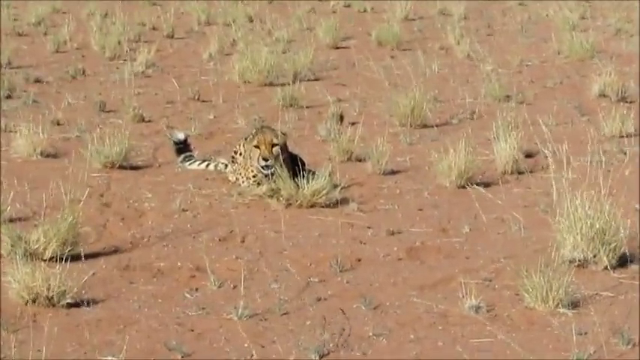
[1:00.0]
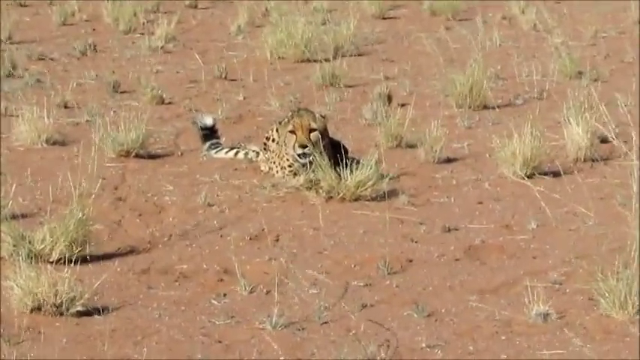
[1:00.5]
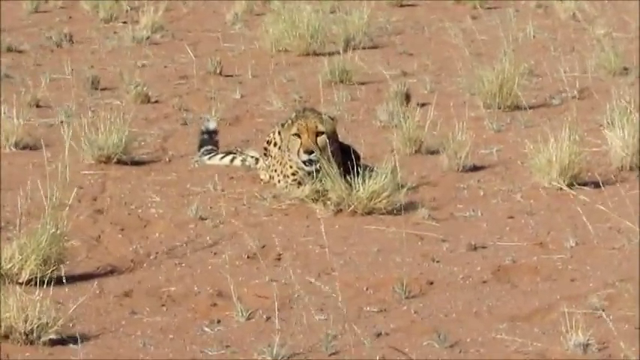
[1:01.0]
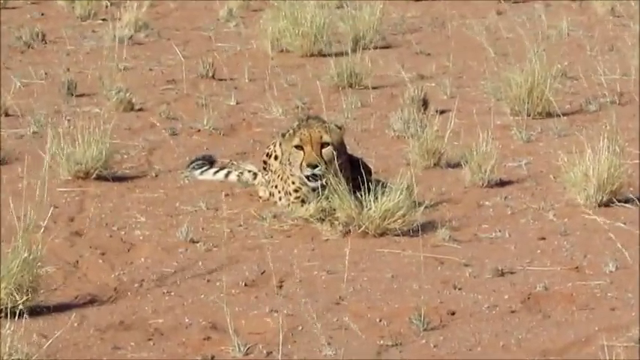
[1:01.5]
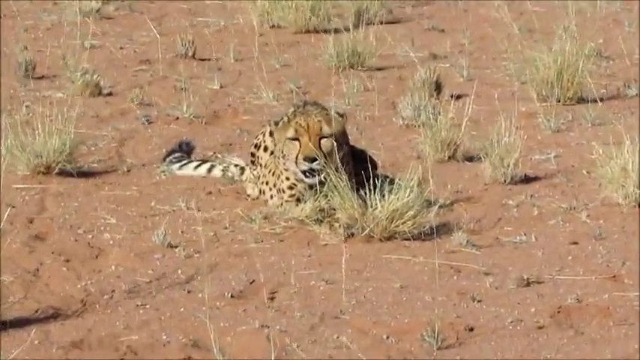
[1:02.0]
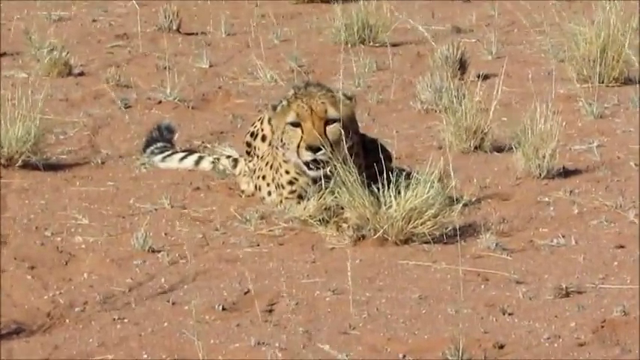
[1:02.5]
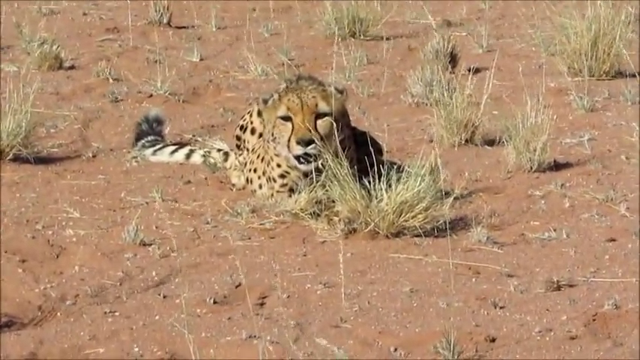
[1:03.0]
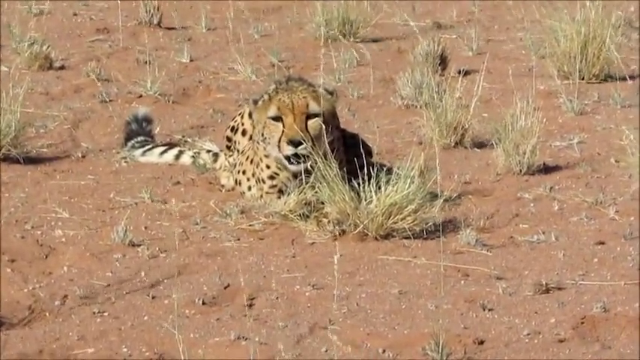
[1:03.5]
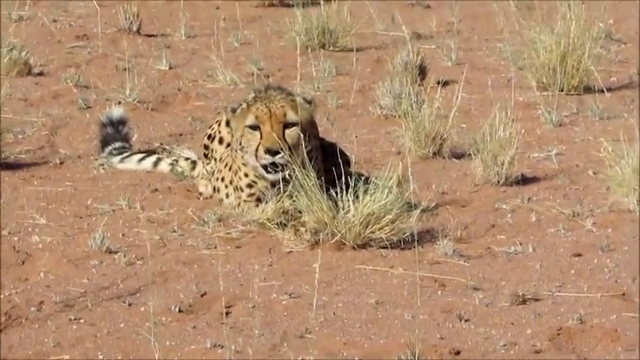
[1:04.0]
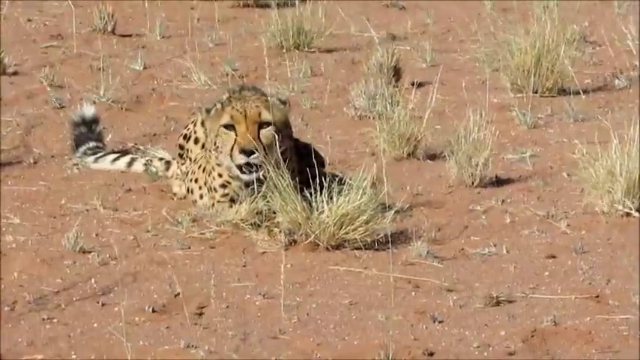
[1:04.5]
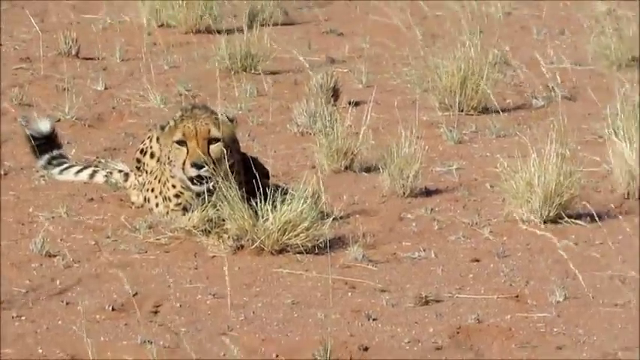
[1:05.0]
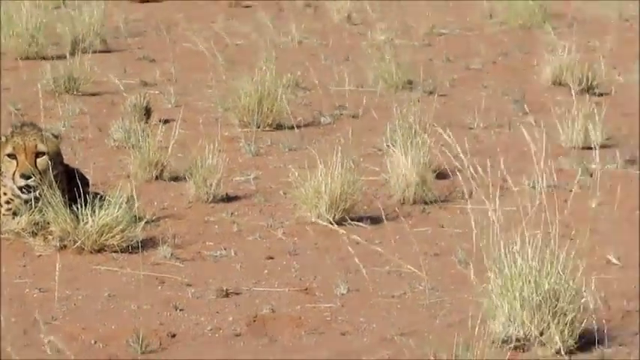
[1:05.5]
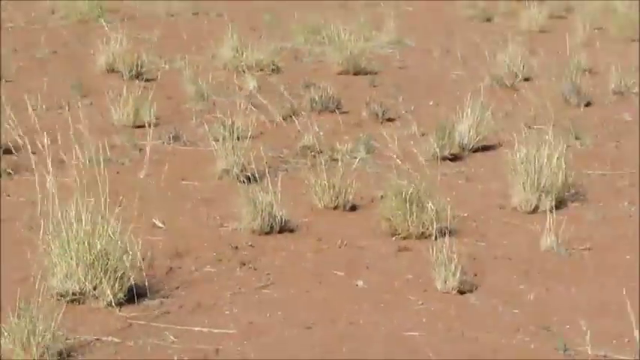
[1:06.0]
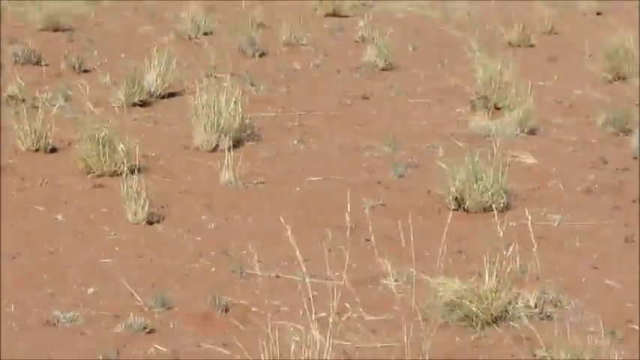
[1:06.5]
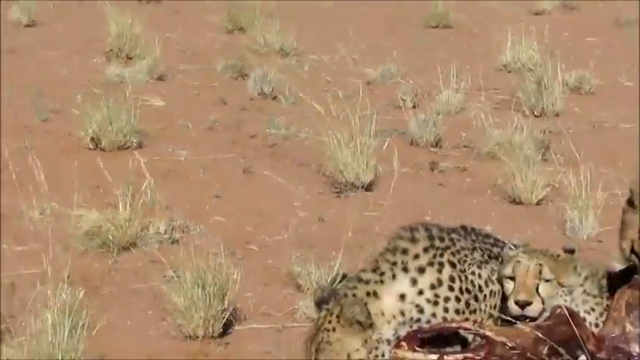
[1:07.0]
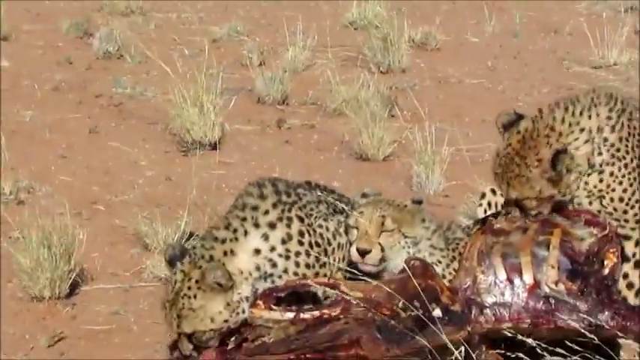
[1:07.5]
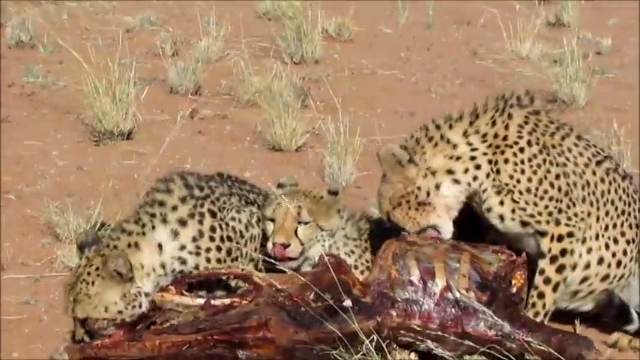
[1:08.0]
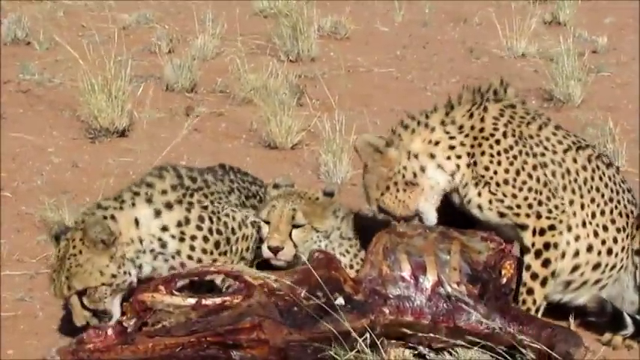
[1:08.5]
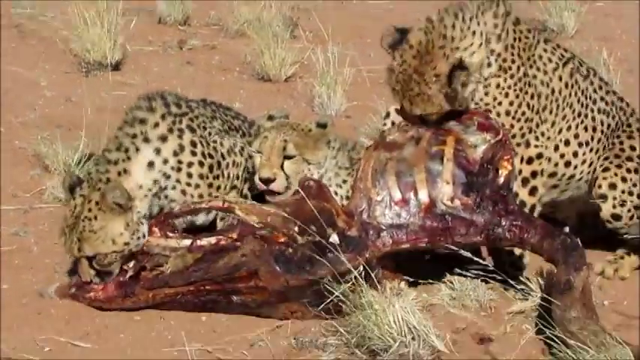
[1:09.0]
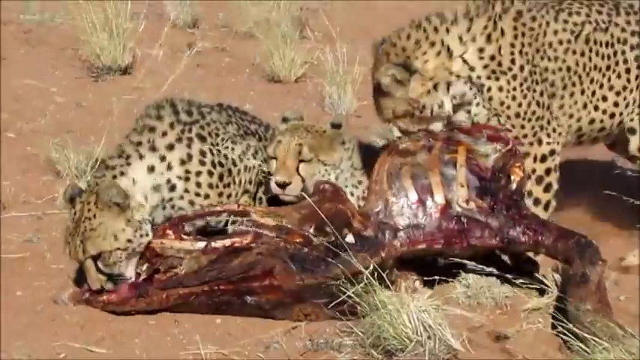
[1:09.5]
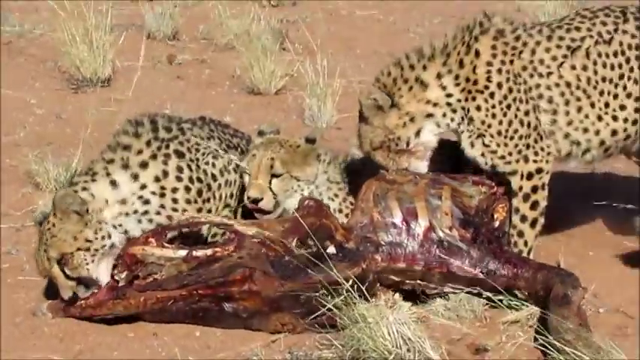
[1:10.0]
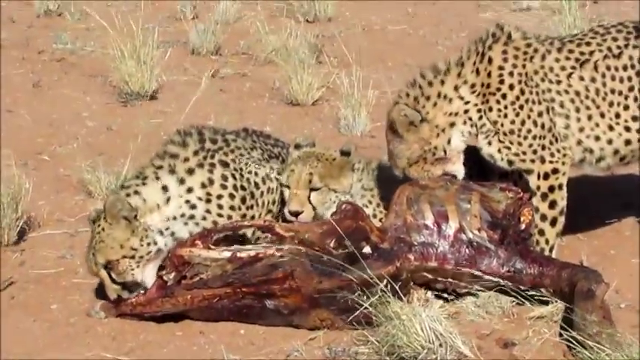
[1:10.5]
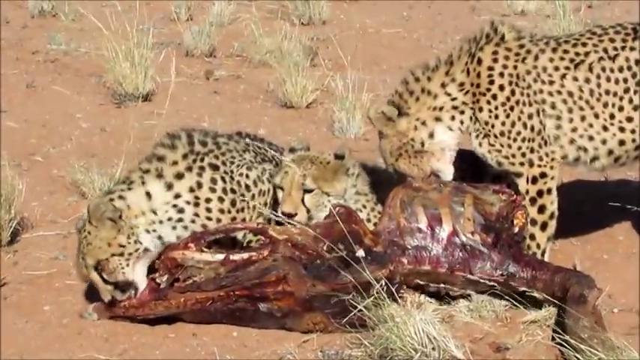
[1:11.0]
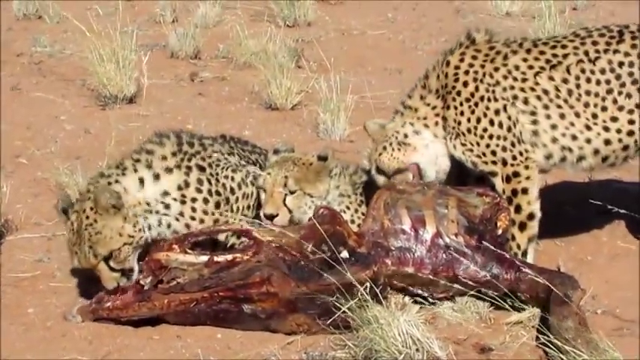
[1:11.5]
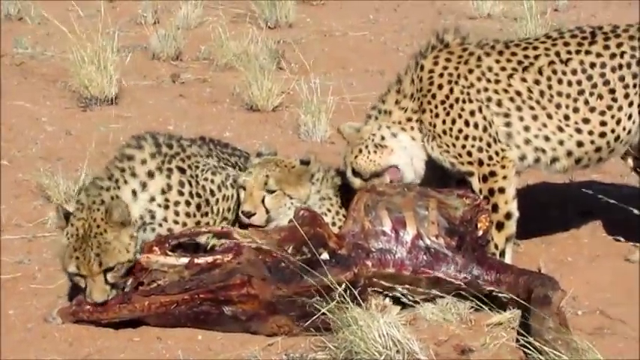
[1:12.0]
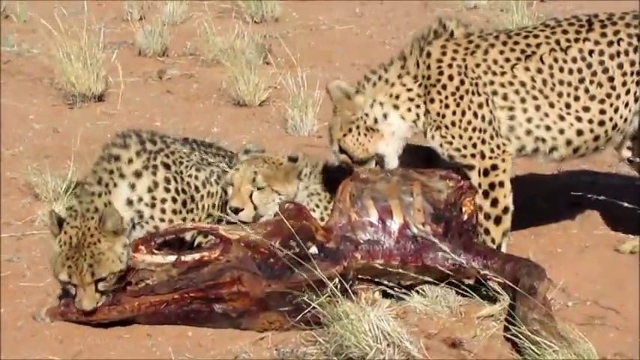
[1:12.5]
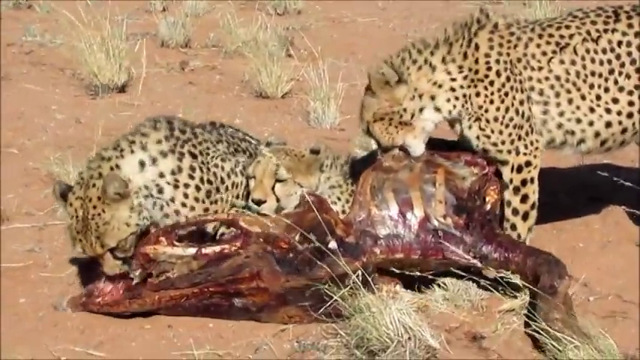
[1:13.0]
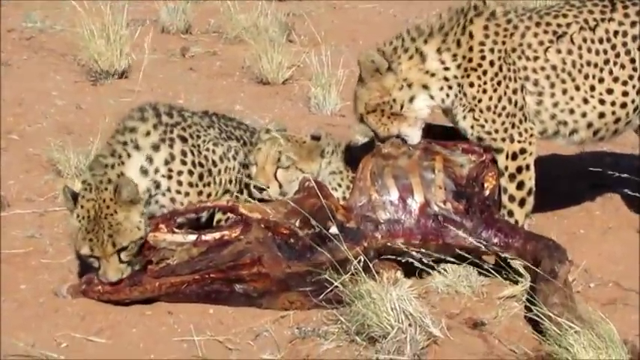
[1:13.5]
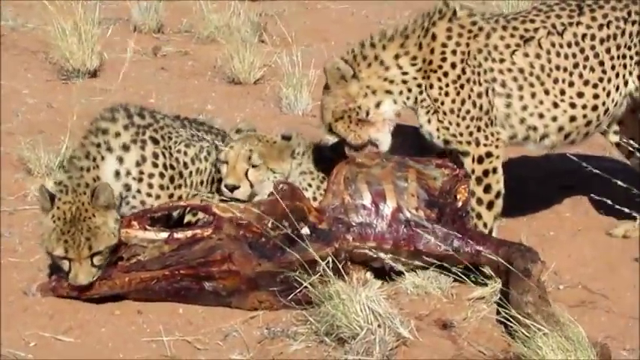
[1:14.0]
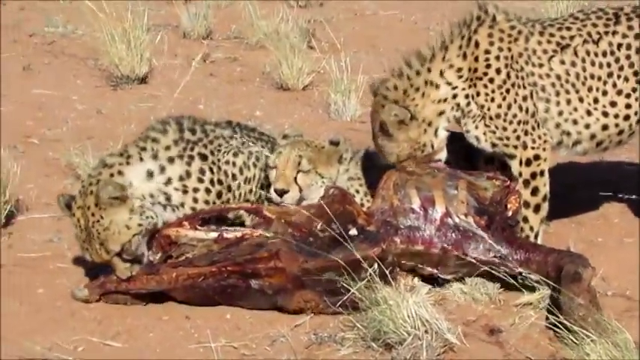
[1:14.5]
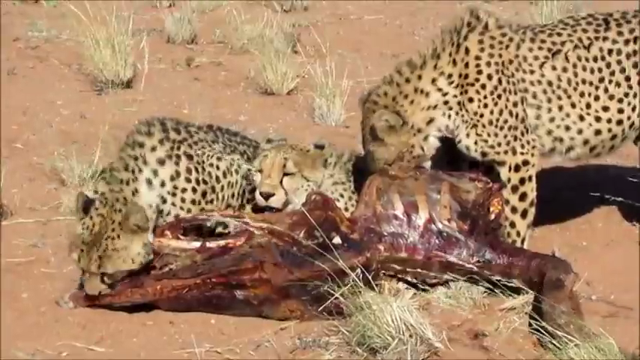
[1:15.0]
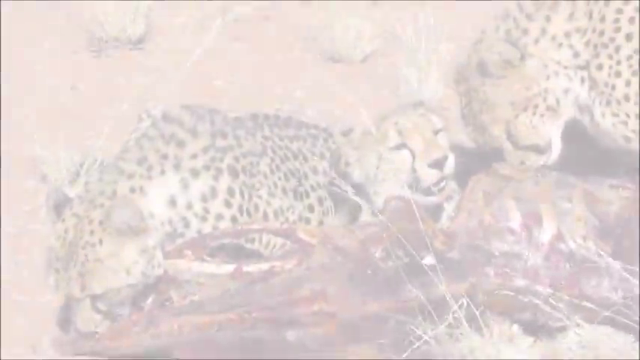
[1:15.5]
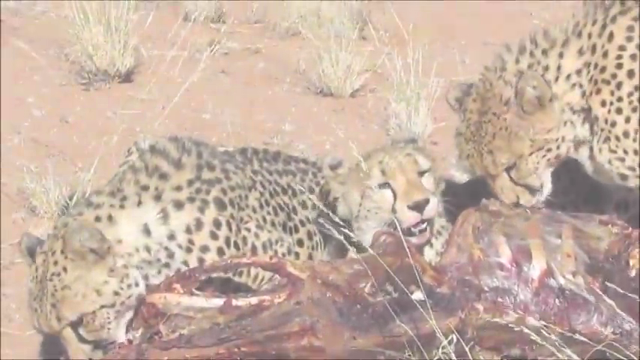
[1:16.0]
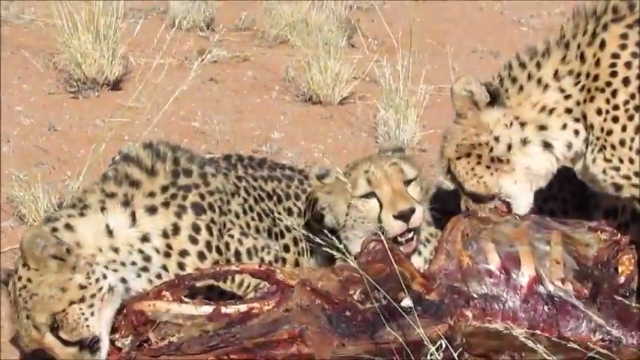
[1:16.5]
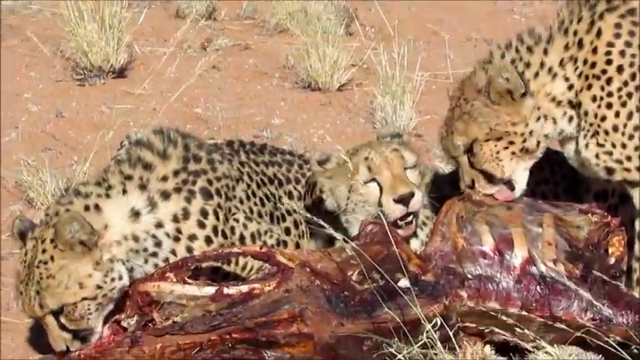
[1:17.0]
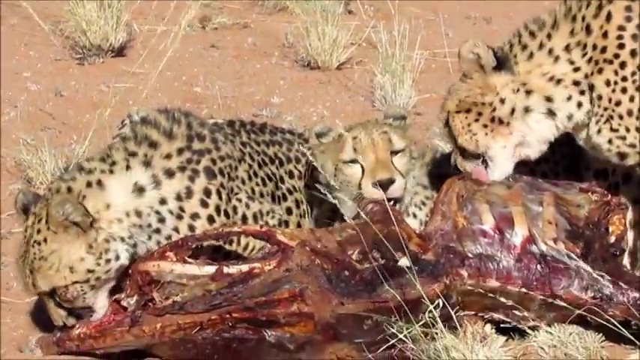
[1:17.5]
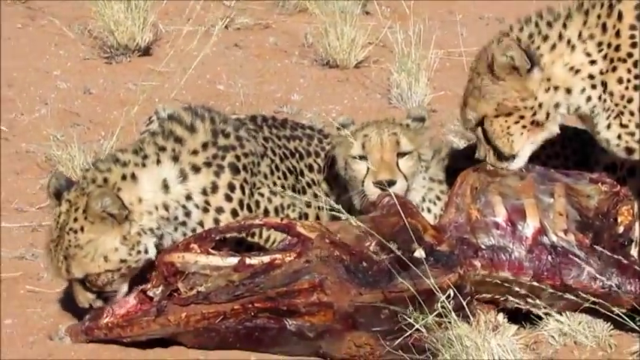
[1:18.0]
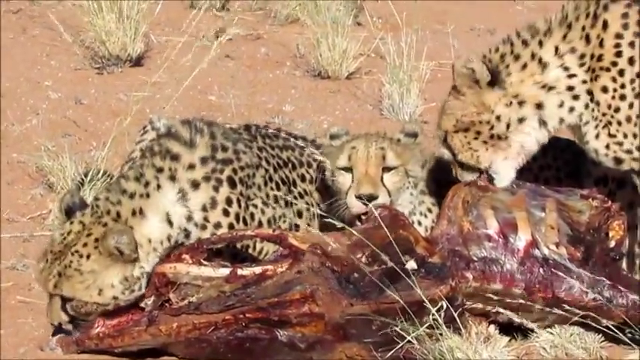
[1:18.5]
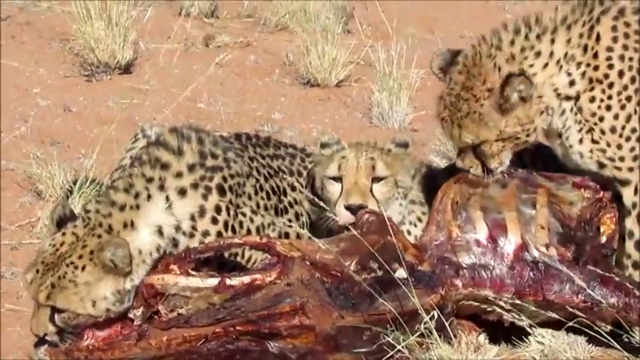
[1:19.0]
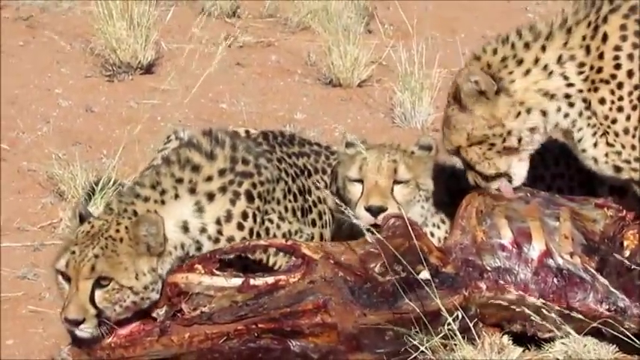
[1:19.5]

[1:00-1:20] A cheetah sits on its own in the middle of the frame in the arid shrubland, looking directly at the camera. The camera focuses and zooms in on the cheetah, which does not seem aggressive but appears to be carefully acknowledging the cameraman. The cheetah waves its tail once or twice before the camera pans back to the right, where the three cheetahs are still eating the carcass. The cheetahs on the left and right eat quite aggressively, using sudden motions to tear the flesh off, while the cheetah in the middle mostly kind of looks at the carcass and casually takes bites. The screen flashes white and probably jumps forward in time a little, showing the cheetahs still eating the carcass.